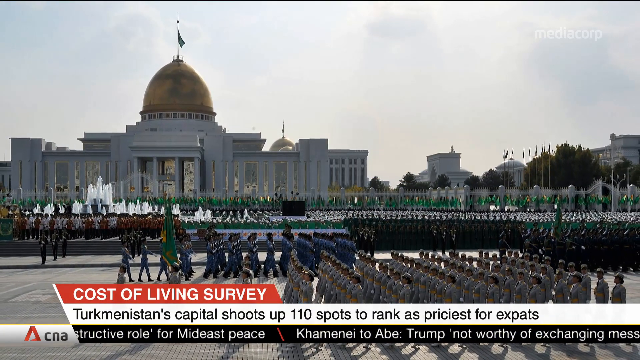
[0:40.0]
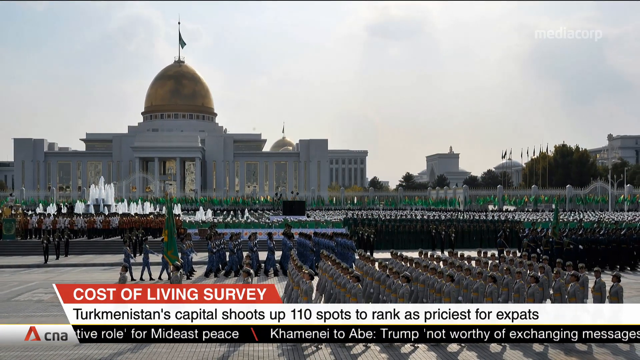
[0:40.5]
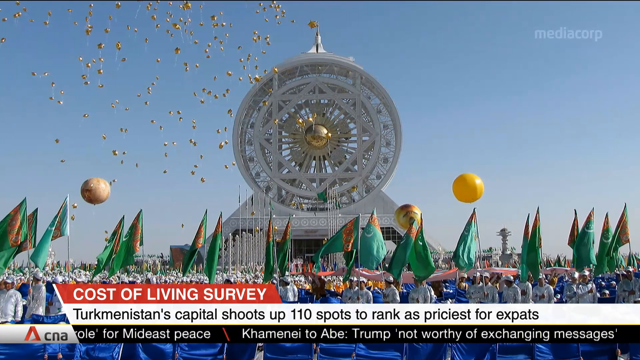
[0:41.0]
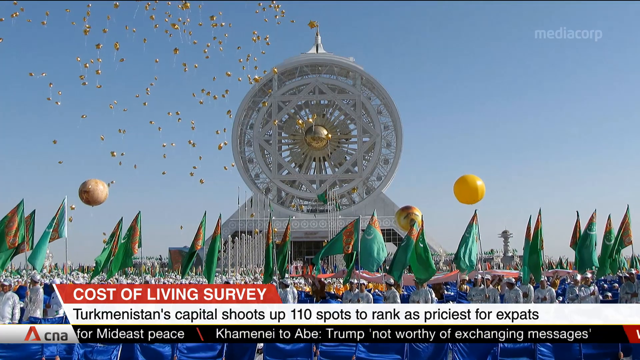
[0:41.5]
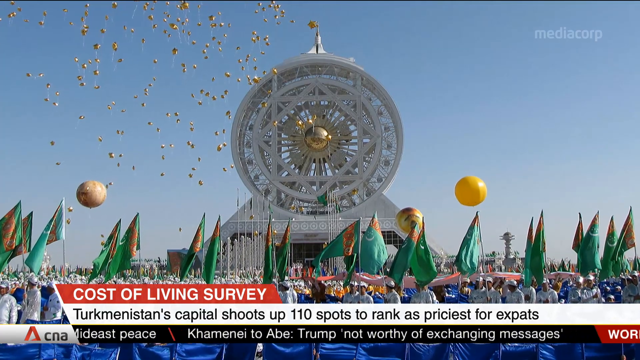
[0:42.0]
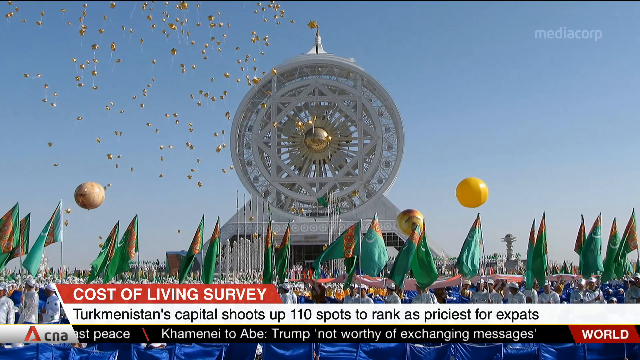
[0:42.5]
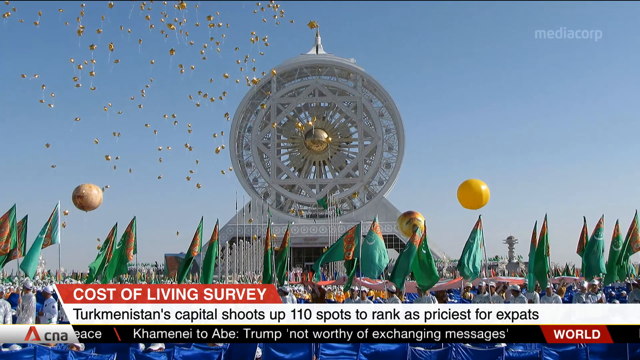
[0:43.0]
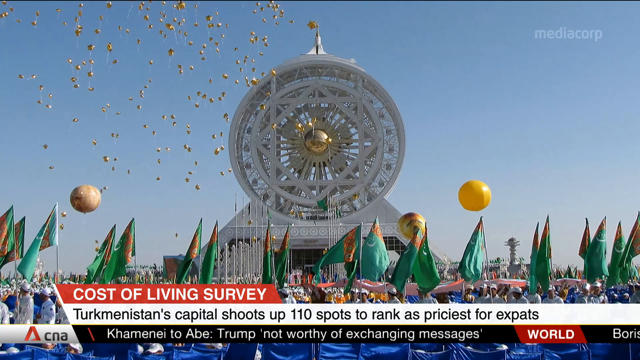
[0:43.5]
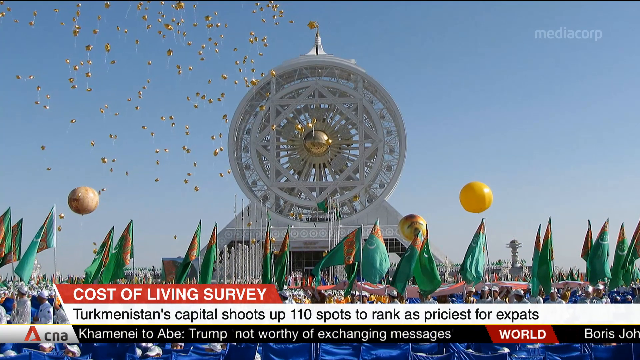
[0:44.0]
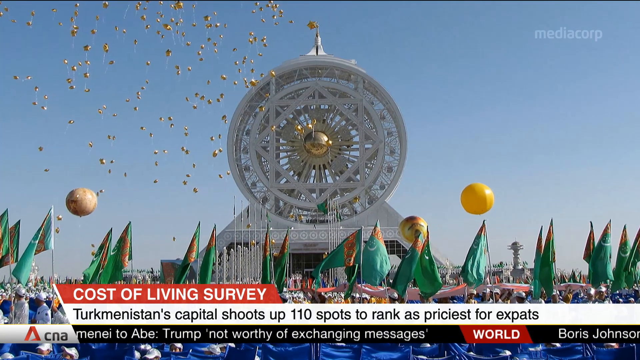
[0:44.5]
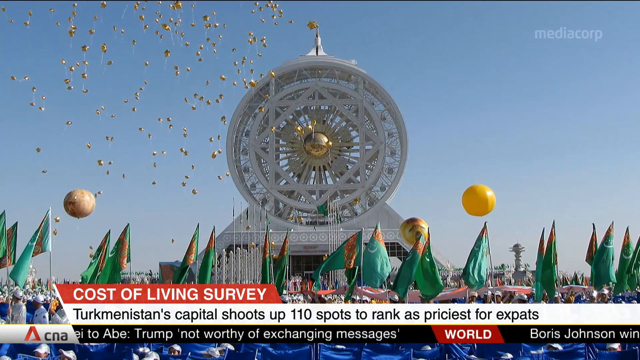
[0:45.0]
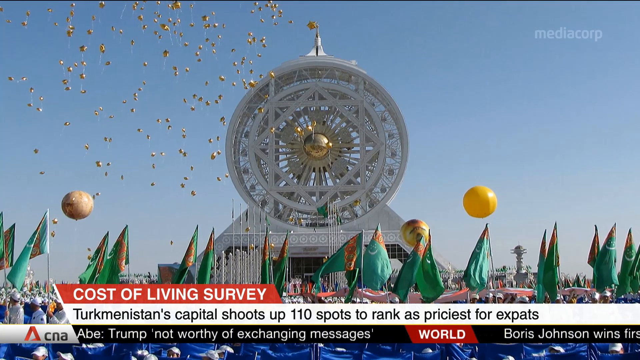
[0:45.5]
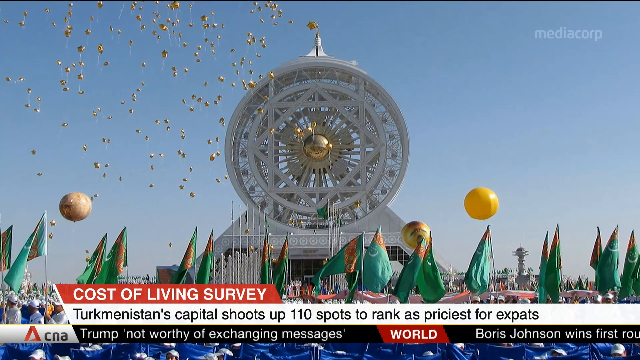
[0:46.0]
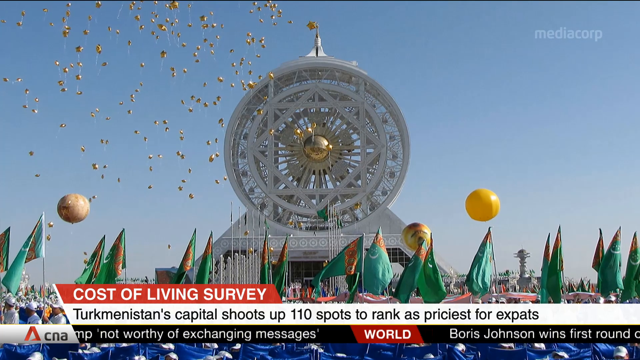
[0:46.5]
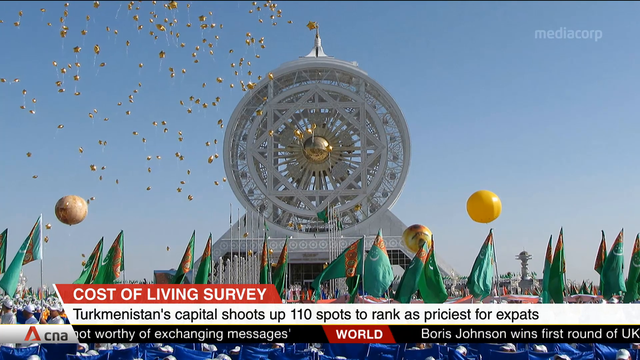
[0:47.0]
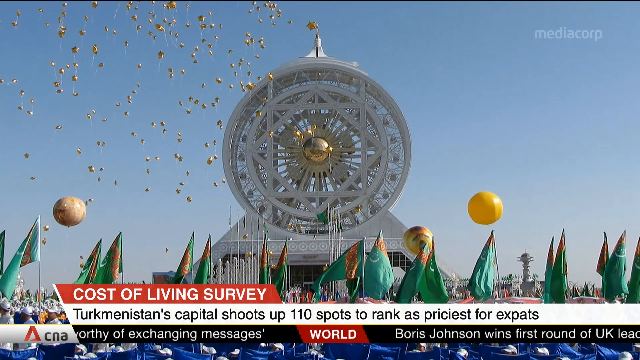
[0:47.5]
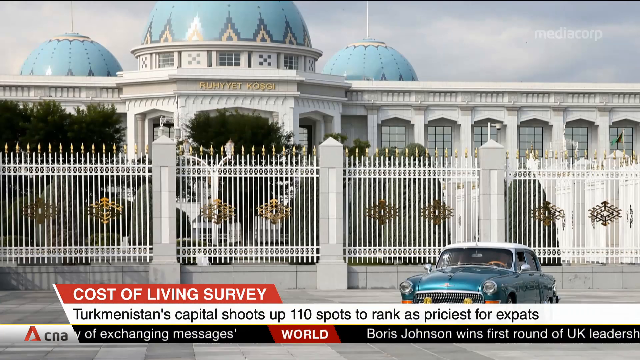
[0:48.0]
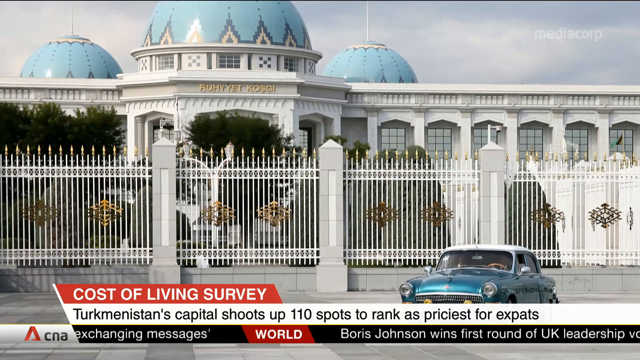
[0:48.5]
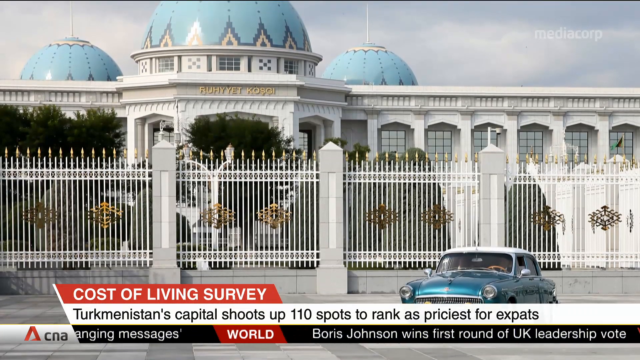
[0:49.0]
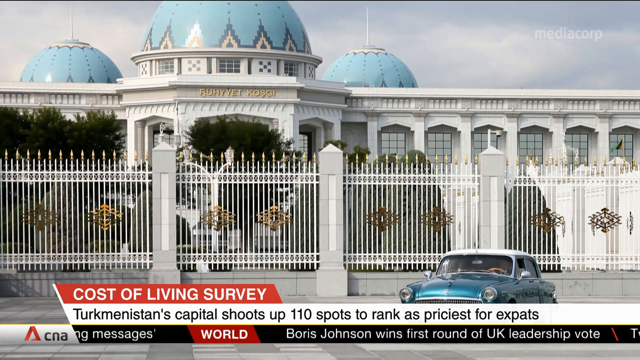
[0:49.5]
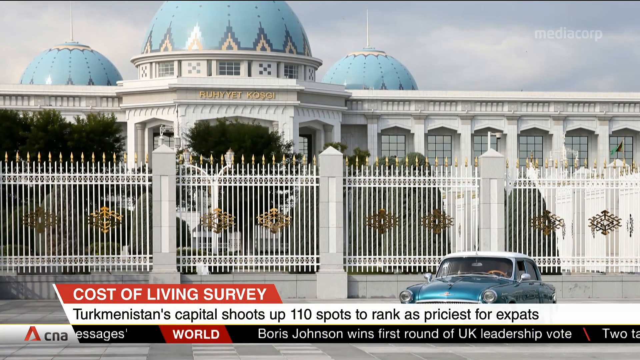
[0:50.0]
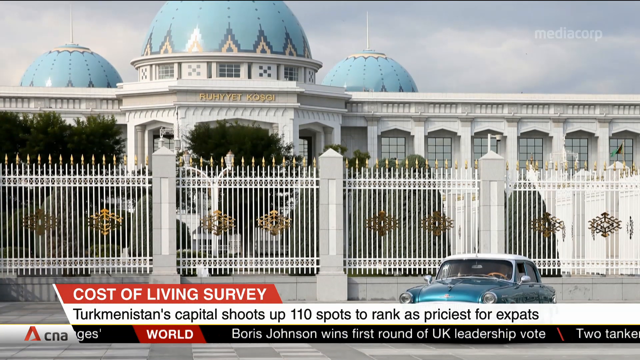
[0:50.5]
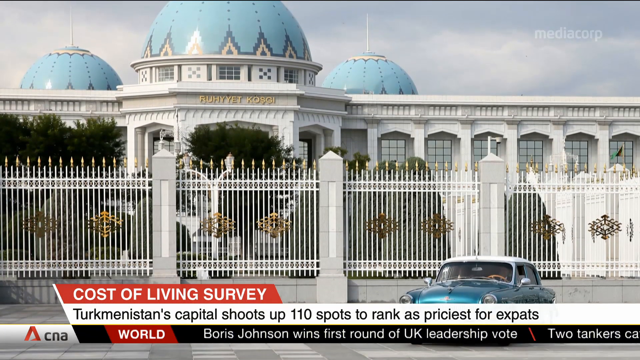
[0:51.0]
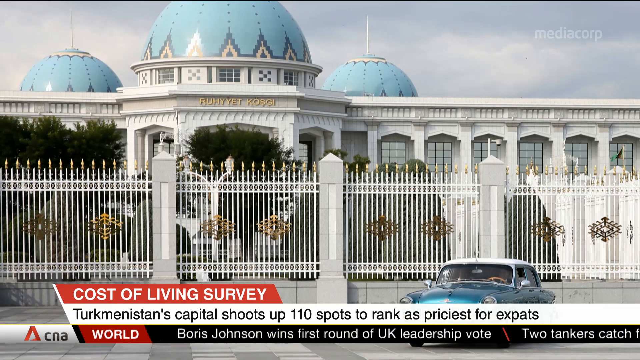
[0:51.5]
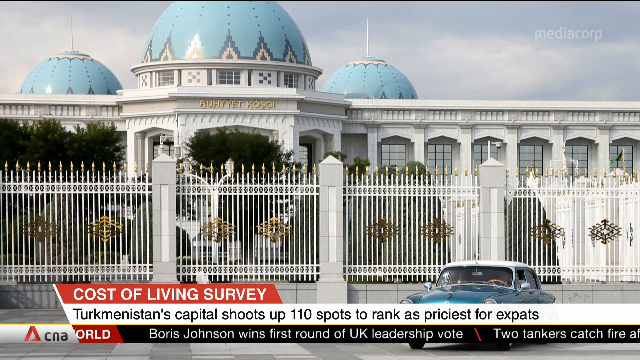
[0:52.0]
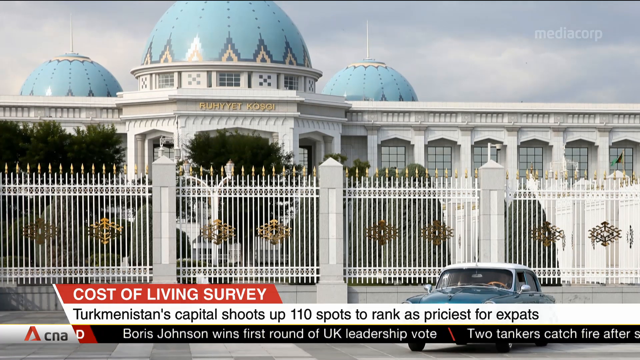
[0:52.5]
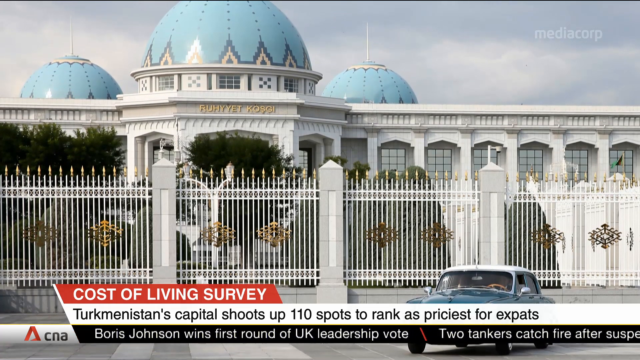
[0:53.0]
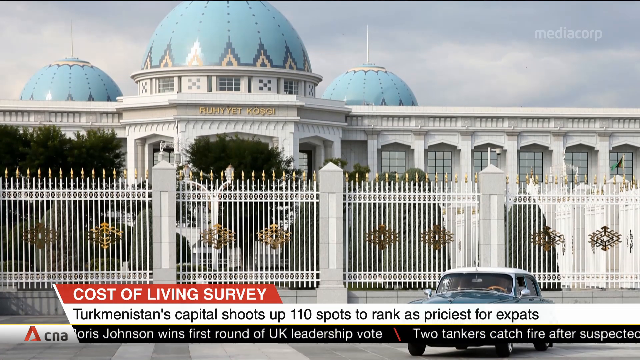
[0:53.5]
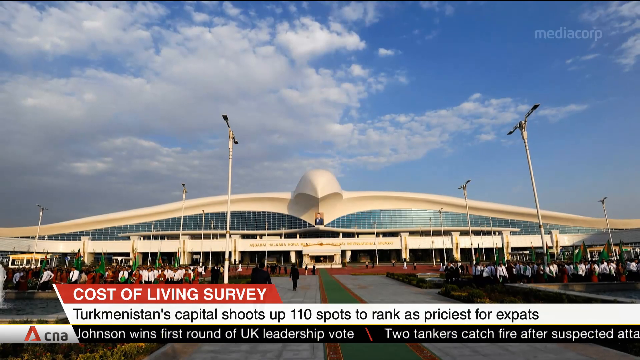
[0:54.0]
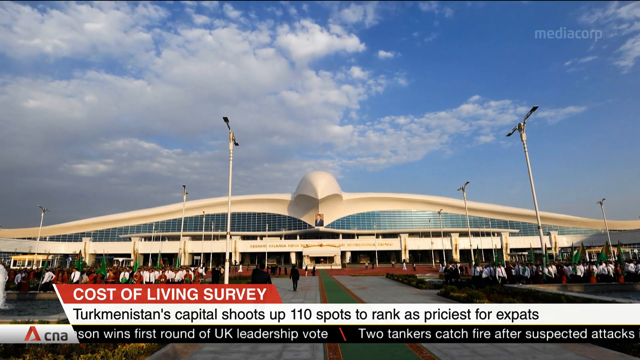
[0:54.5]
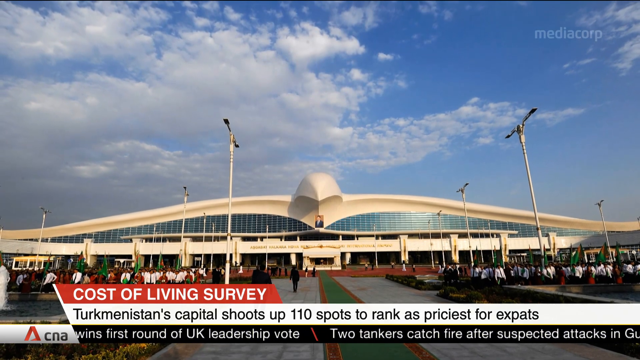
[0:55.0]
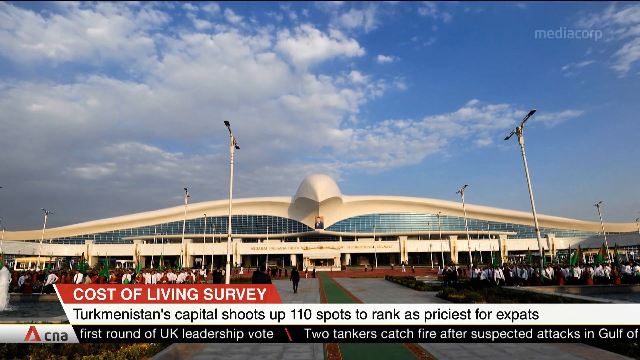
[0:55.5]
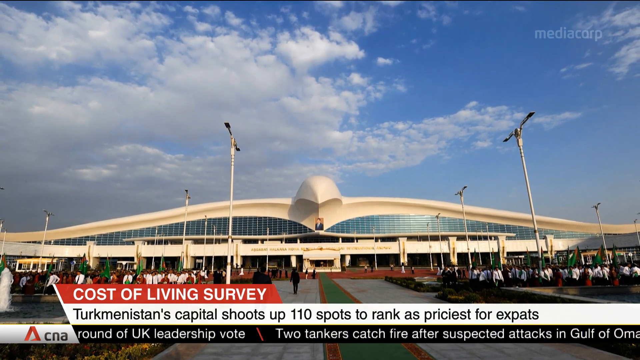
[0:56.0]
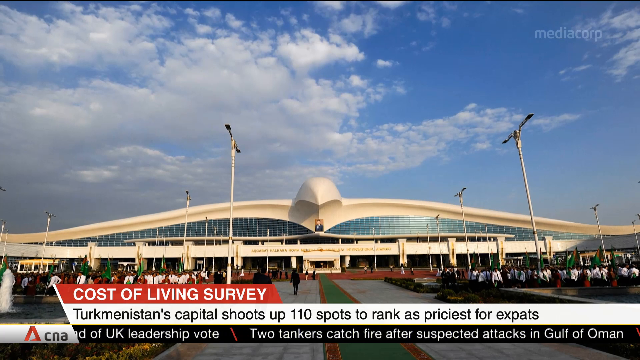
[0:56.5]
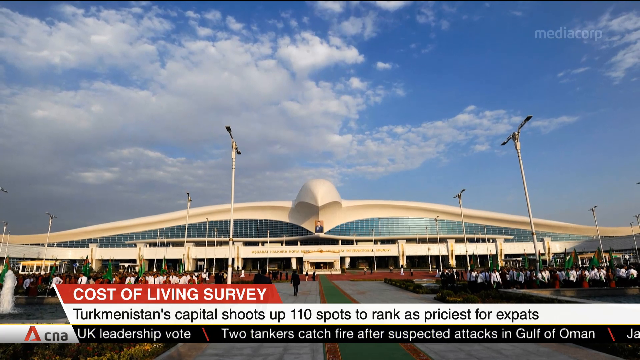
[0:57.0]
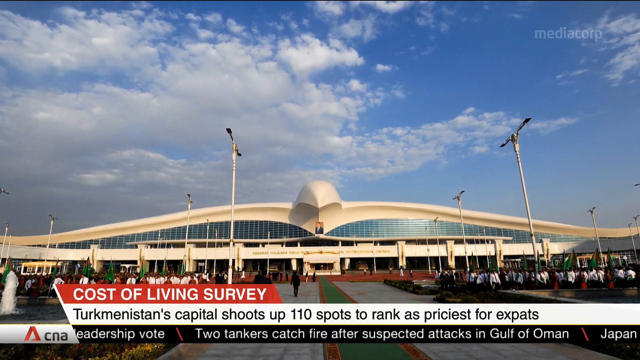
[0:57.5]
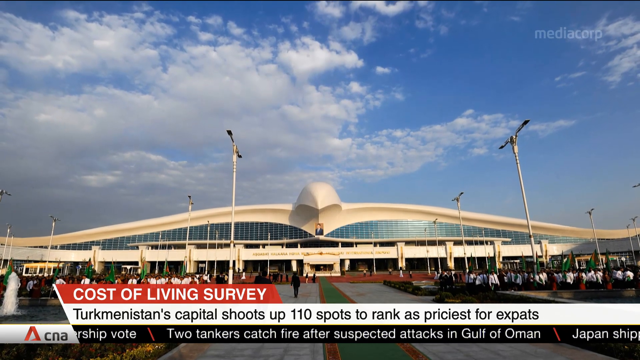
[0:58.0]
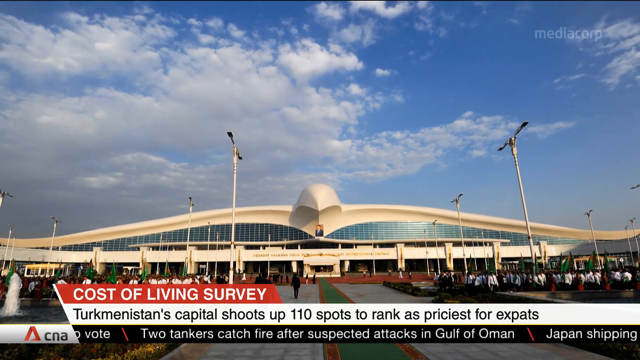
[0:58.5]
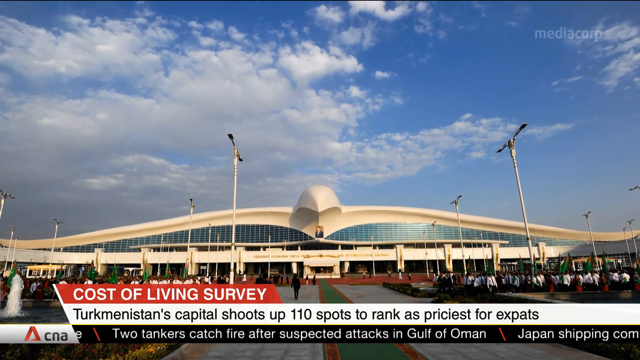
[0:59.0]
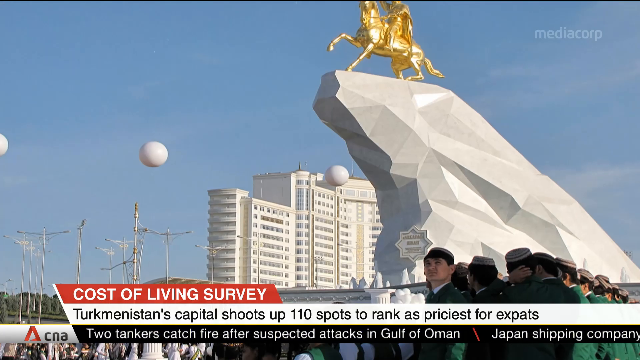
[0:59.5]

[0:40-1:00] The report on the cost of living survey continues as blue flags are shown. A city appears with towers and a blue and white building, a car park outside and a blue sky. A lot of people stand outside; many wear green and lift green flags, waving them up as they march. There is a green carpet for someone to walk on. The camera keeps moving, following the action, and zooms in from the flags being raised to the city. It looks like footage from a news channel.